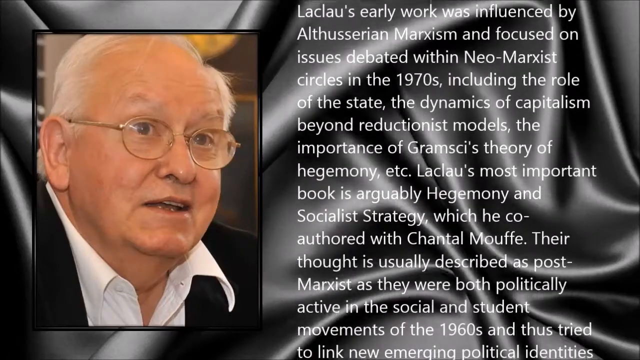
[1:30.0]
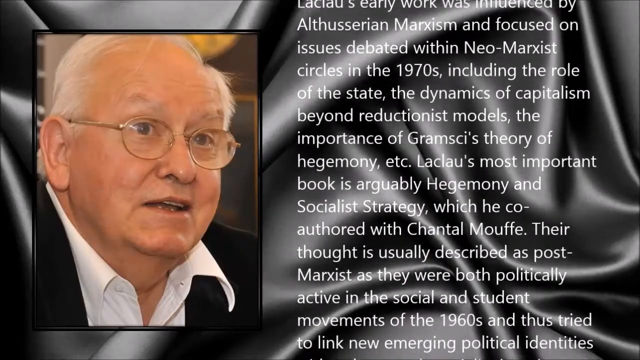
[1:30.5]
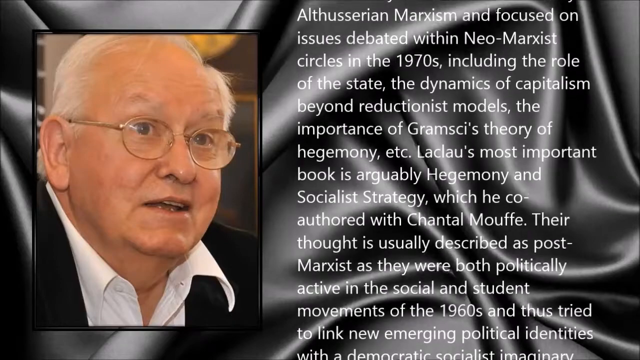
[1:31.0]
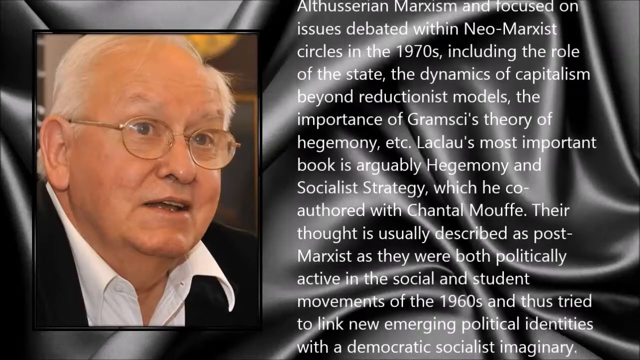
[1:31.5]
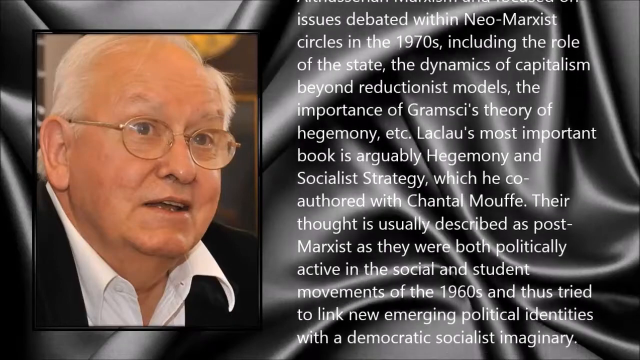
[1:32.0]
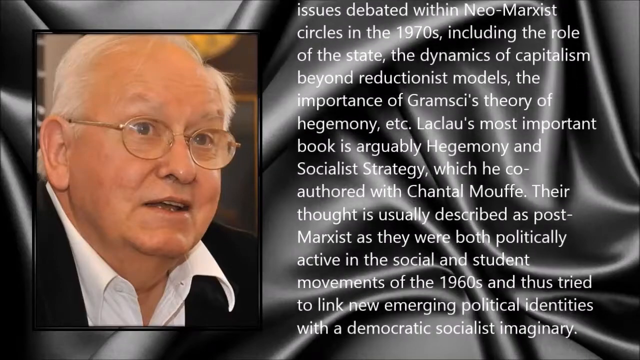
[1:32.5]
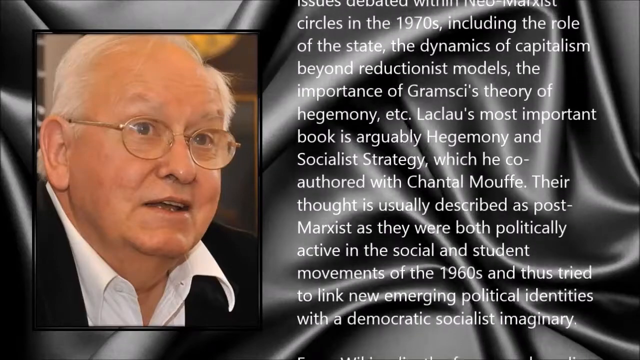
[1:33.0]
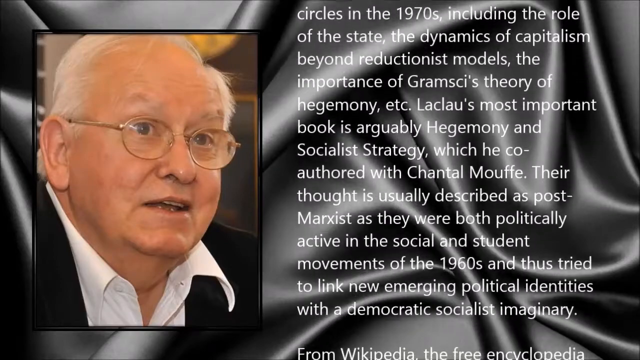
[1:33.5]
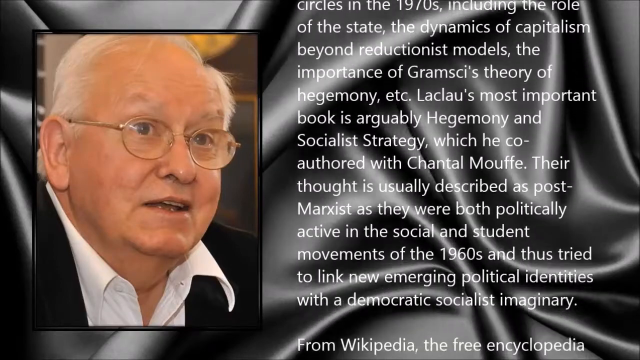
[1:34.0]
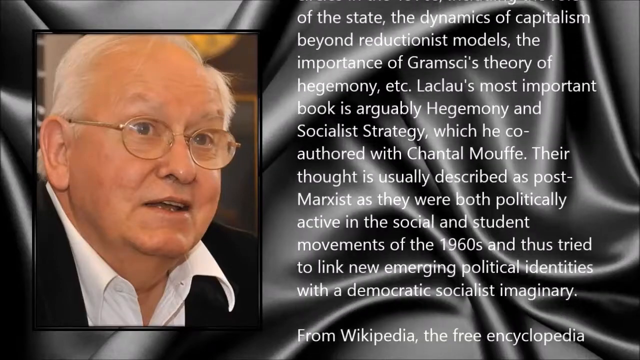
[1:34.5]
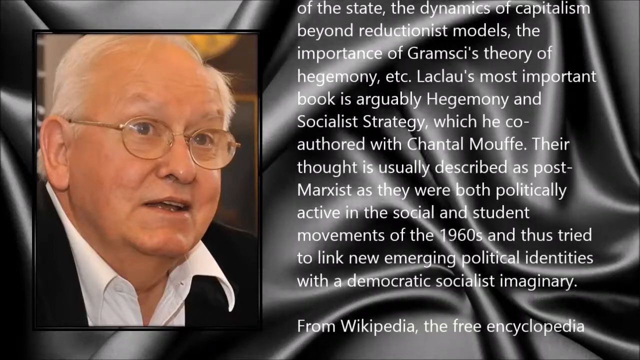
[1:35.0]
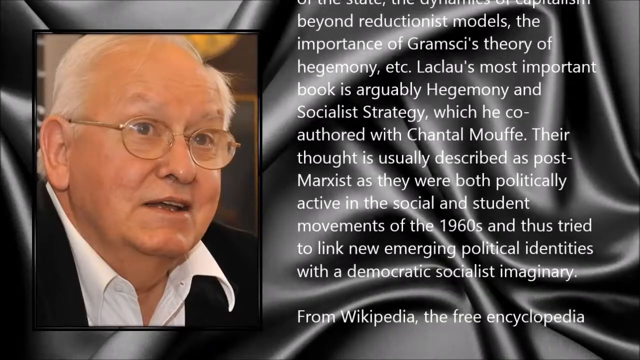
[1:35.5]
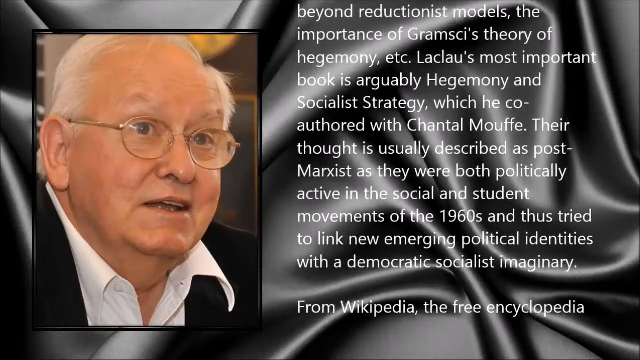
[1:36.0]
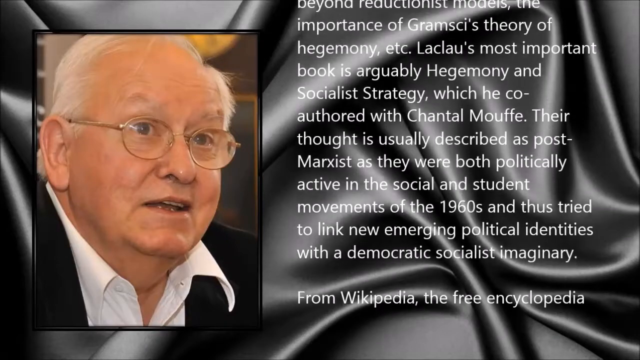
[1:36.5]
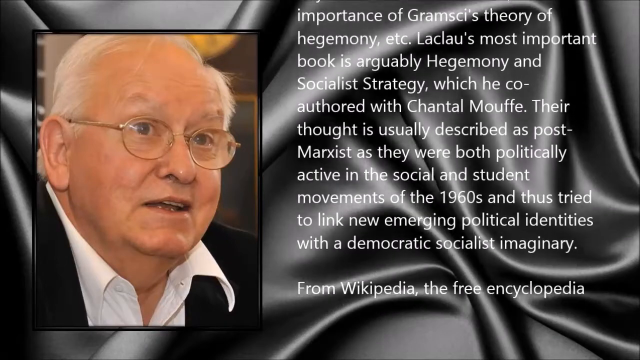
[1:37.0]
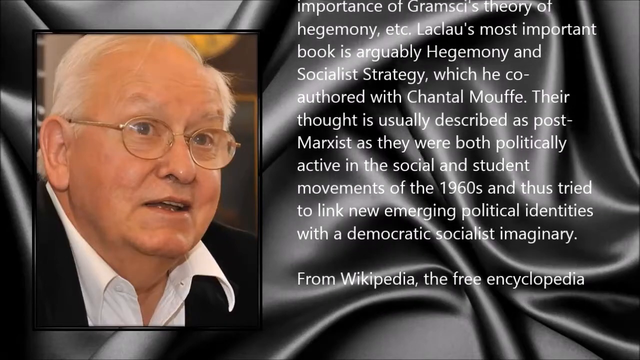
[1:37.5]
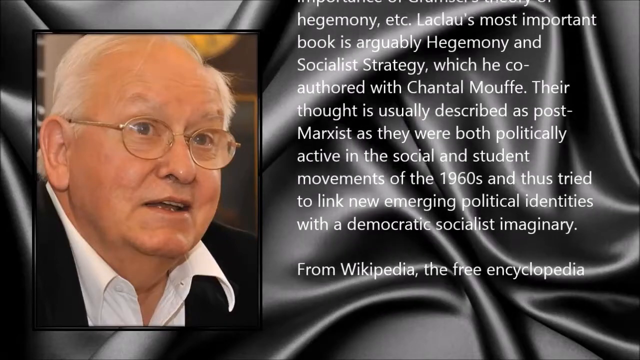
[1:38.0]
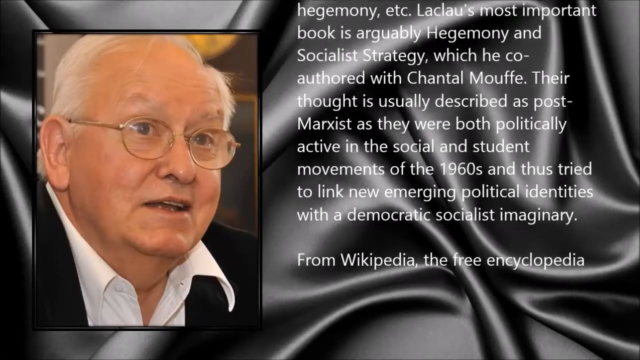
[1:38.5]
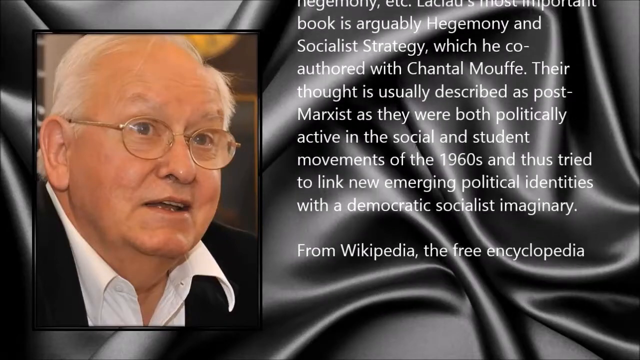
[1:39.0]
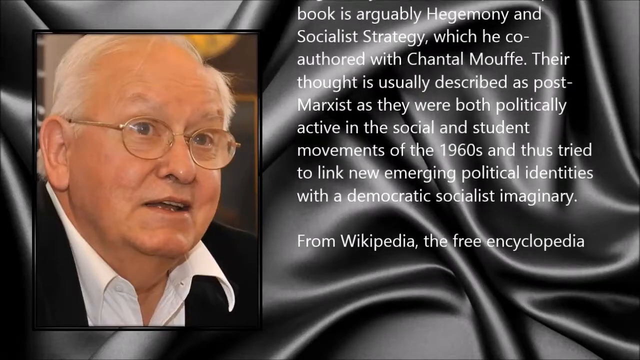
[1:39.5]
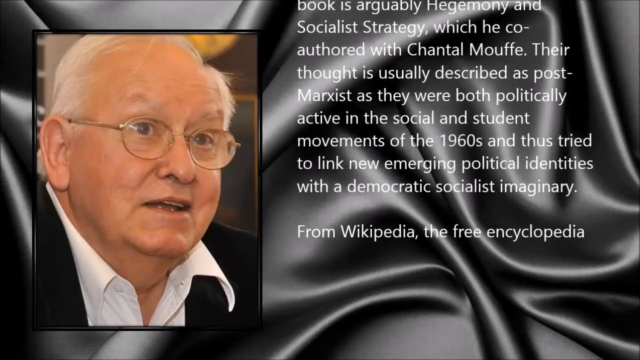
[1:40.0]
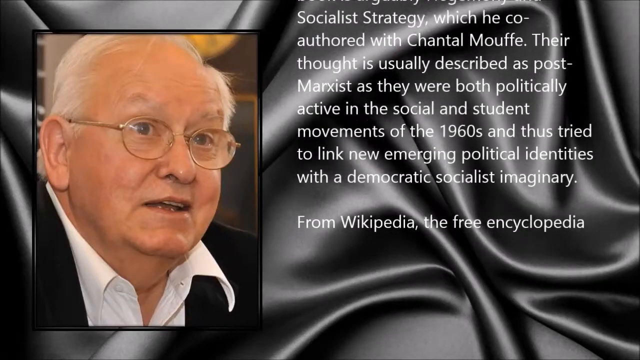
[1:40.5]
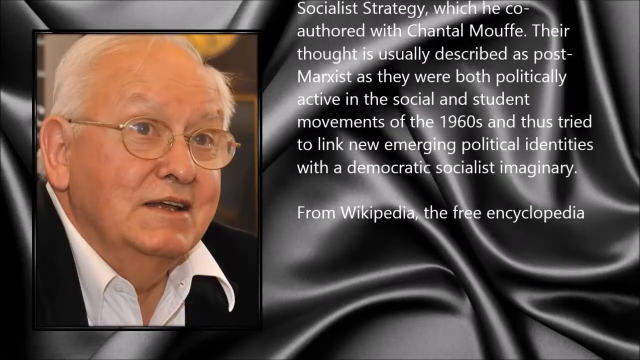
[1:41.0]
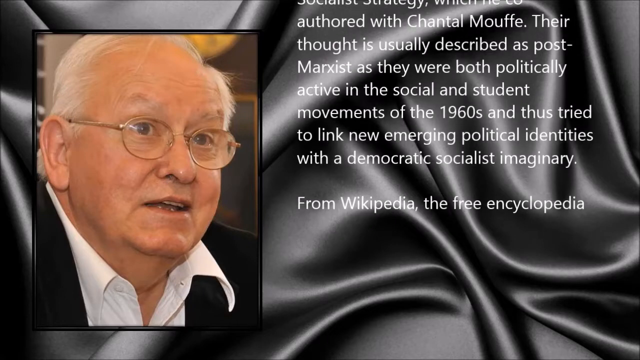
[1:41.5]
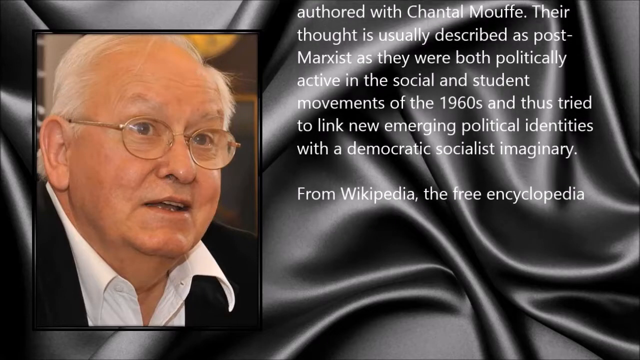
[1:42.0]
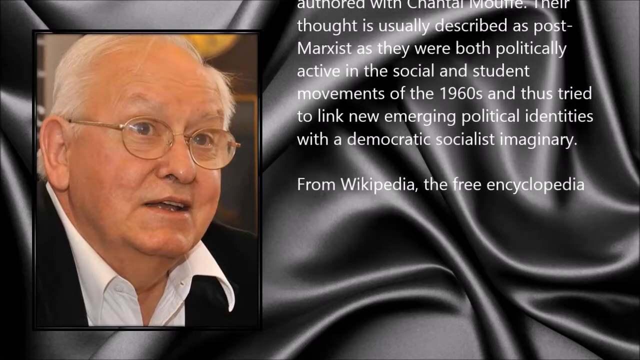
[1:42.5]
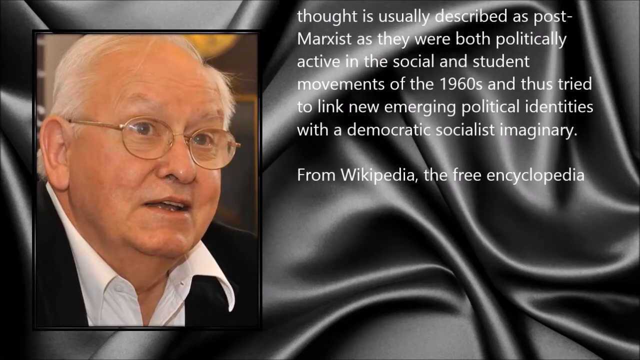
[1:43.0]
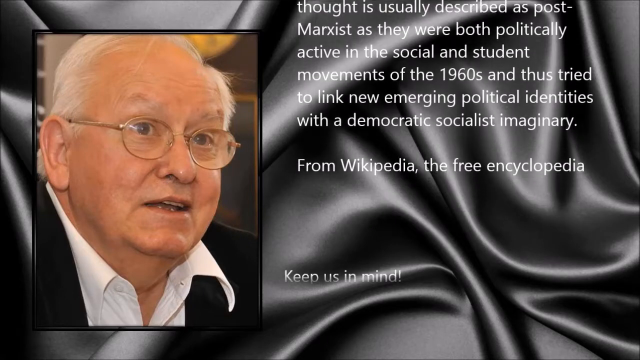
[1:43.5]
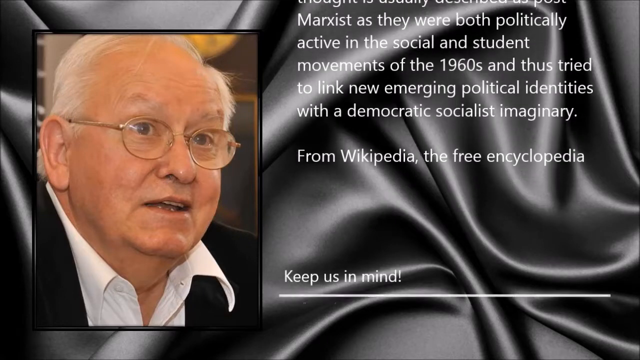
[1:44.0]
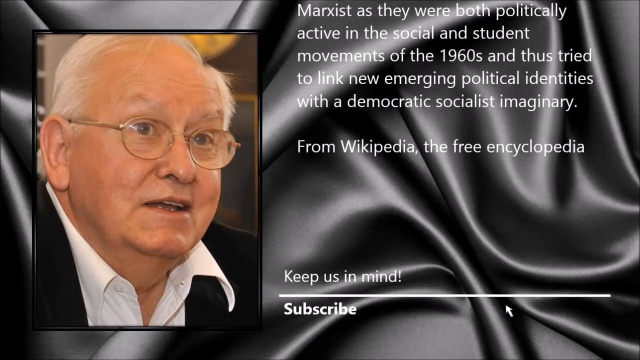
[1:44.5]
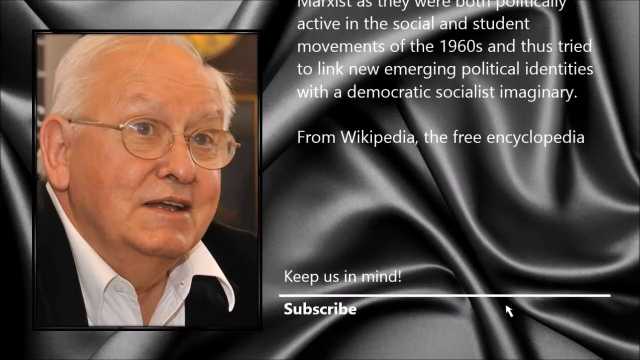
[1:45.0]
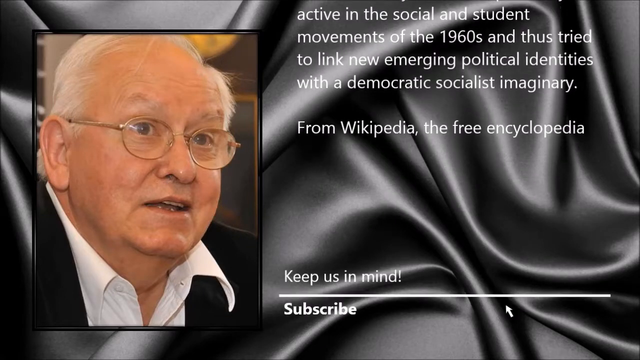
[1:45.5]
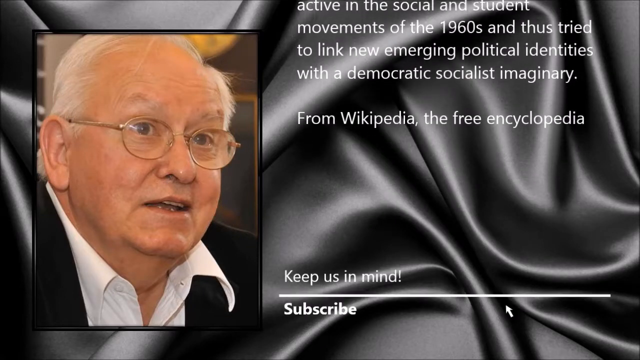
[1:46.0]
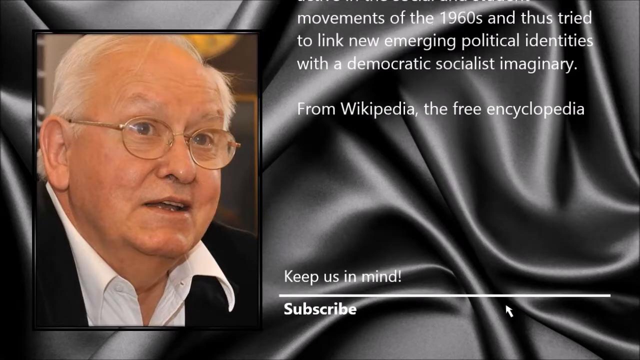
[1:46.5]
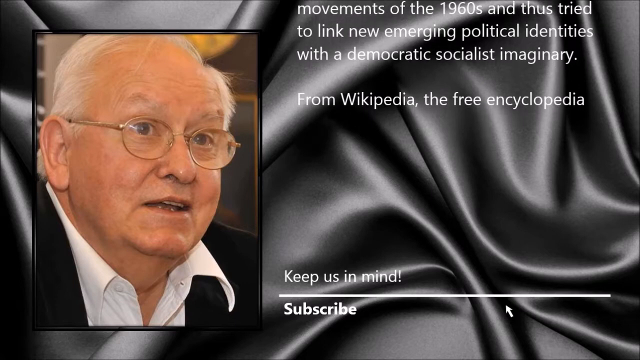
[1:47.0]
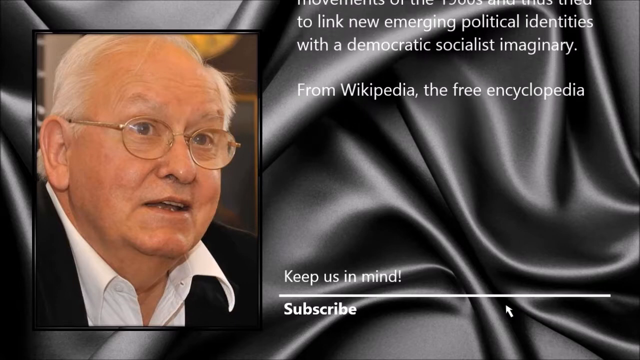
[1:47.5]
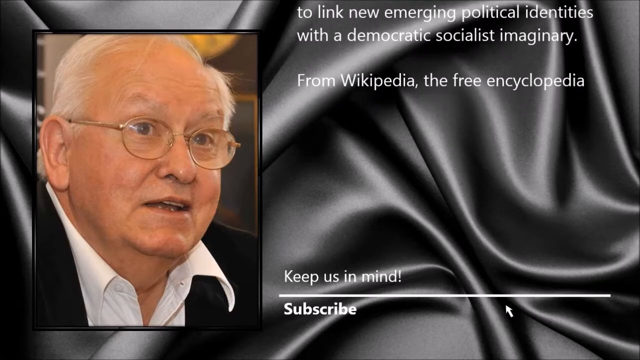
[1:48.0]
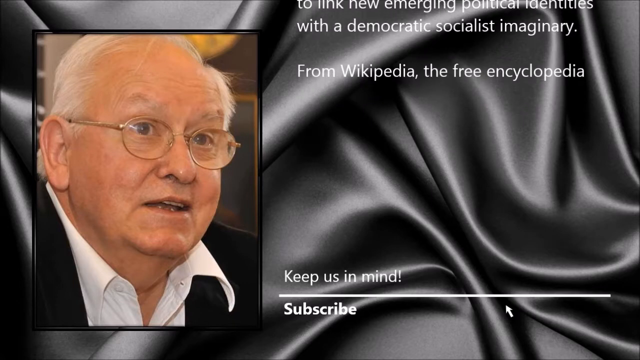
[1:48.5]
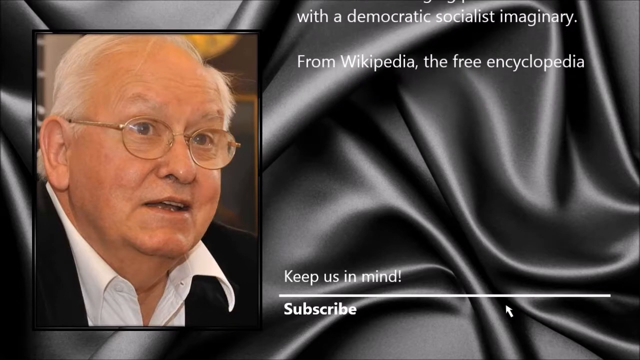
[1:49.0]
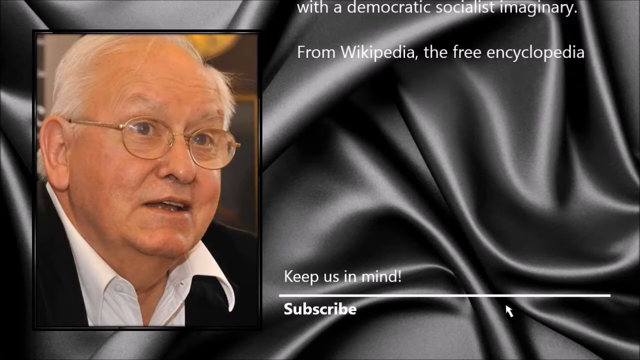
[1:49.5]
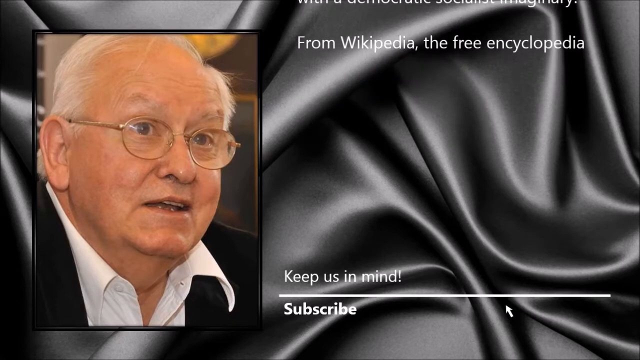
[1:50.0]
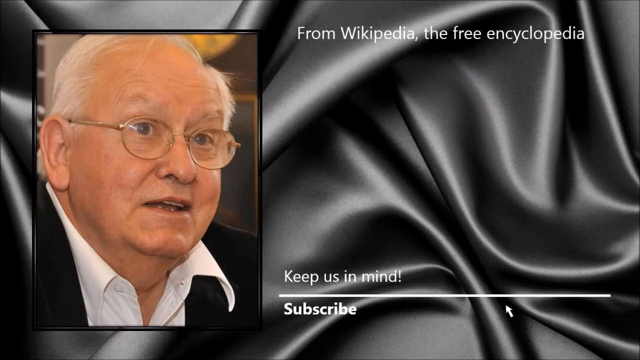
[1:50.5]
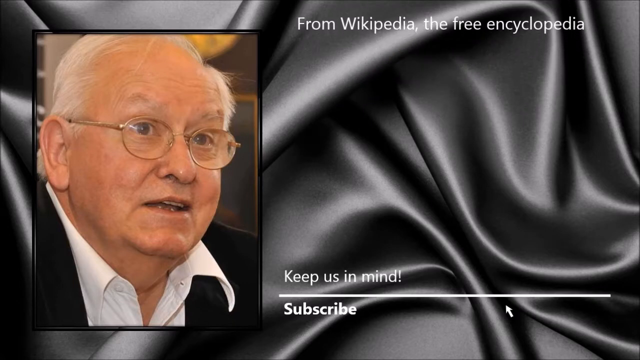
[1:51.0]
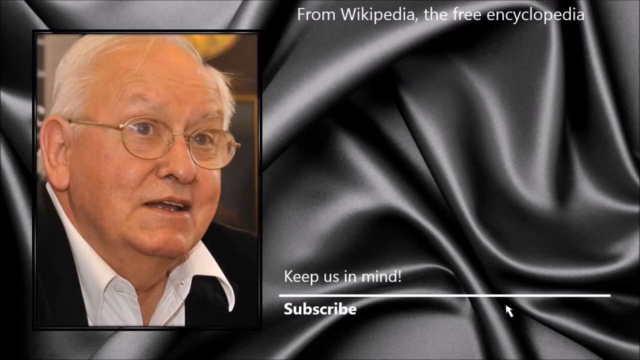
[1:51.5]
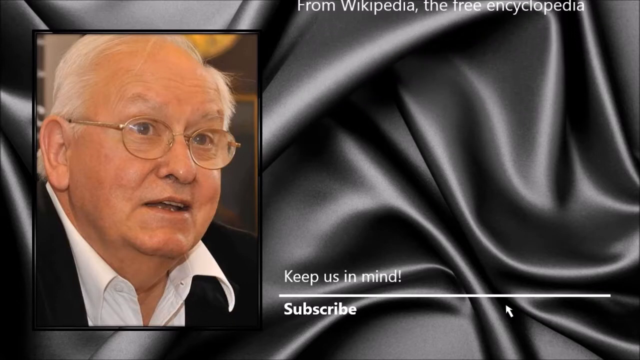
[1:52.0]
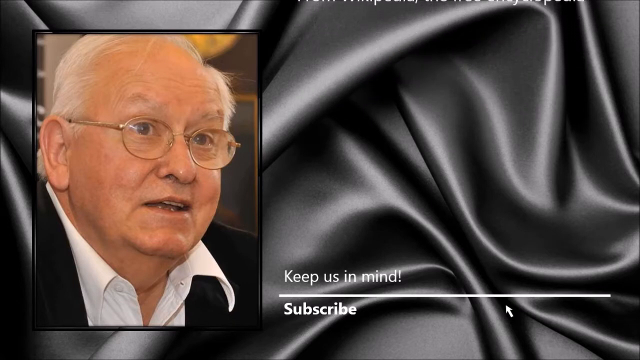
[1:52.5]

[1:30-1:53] A very large picture shows a white man with gray hair and glasses looking at something, in kind of a side view. Next to him, a long memorial write-up from Wikipedia scrolls up, telling what the man did and the legacy he leaves: how he was a professor, where he studied, what he did in his life and who influenced him. At the end of the write-up the text reads "from Wikipedia, the Free Encyclopedia", followed by "keep us in mind!", a line, and then "subscribe". The background is a draped satin silk piece of fabric that softens the look of the picture and words in front of it.